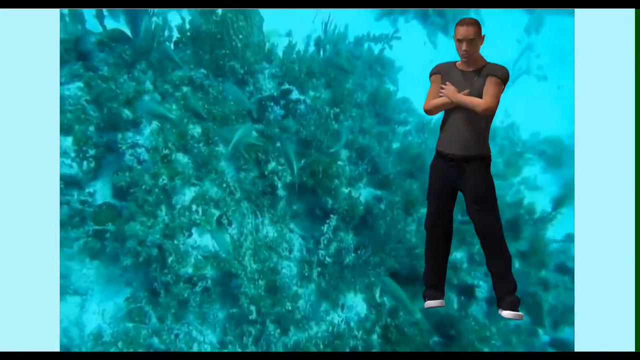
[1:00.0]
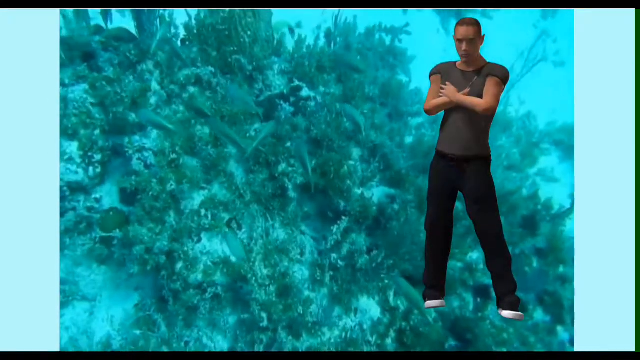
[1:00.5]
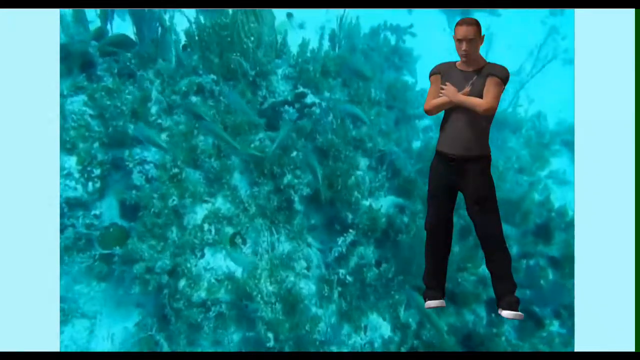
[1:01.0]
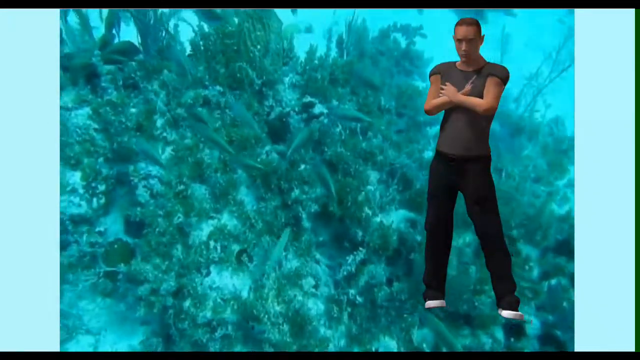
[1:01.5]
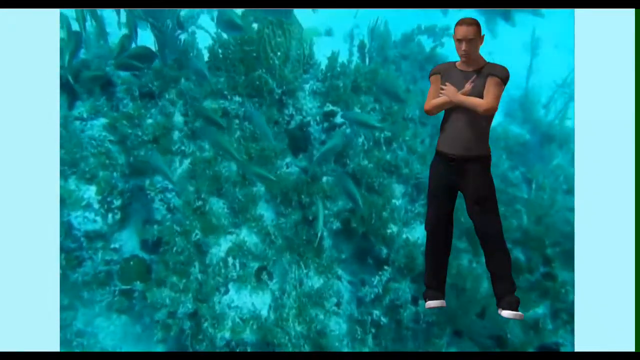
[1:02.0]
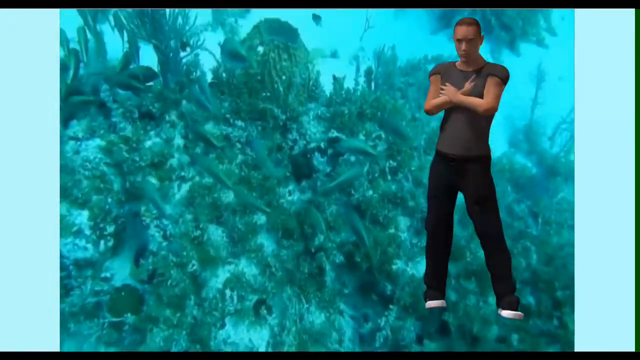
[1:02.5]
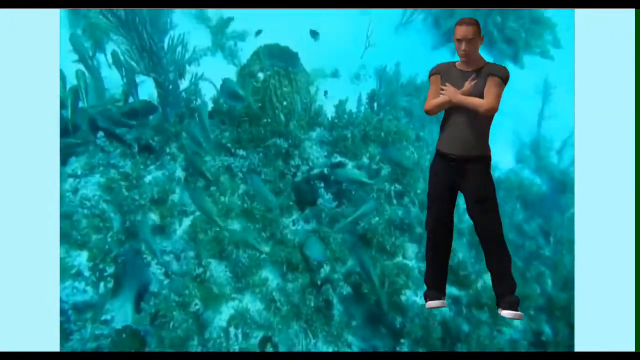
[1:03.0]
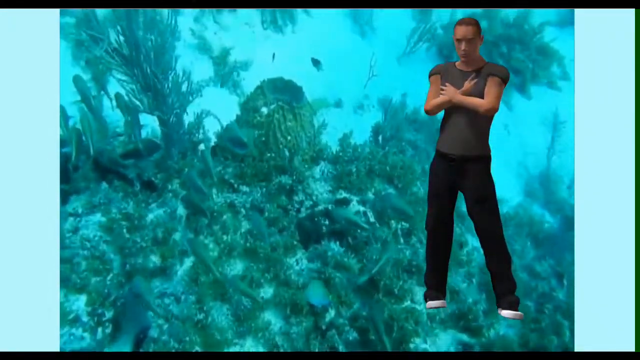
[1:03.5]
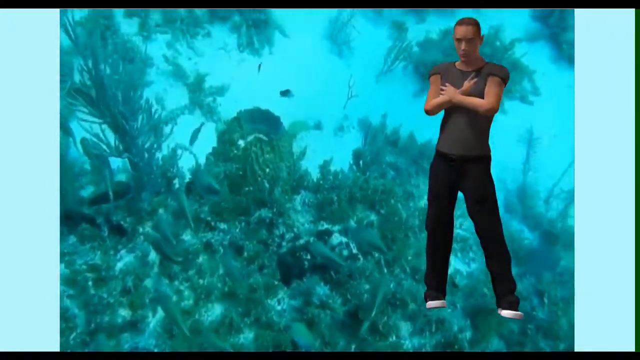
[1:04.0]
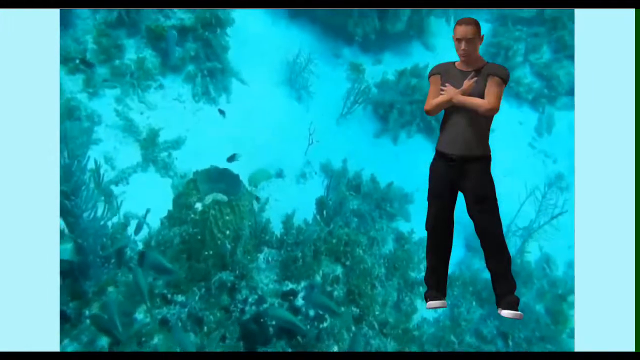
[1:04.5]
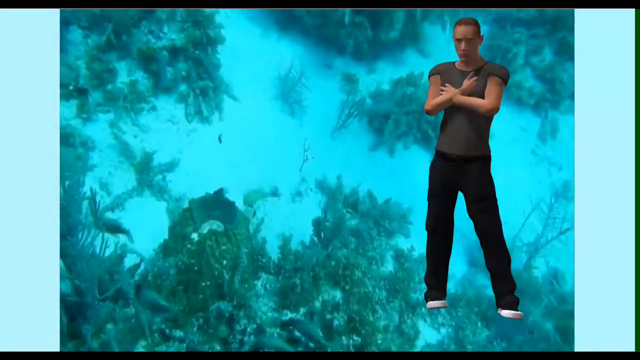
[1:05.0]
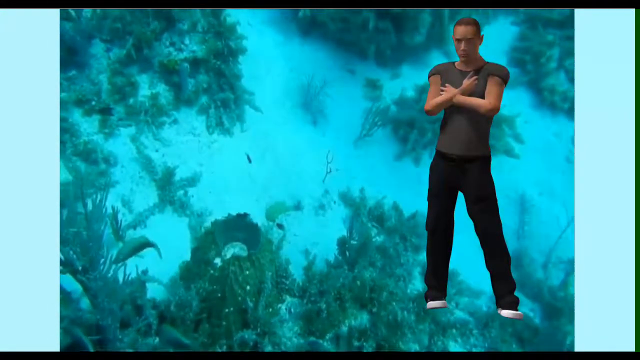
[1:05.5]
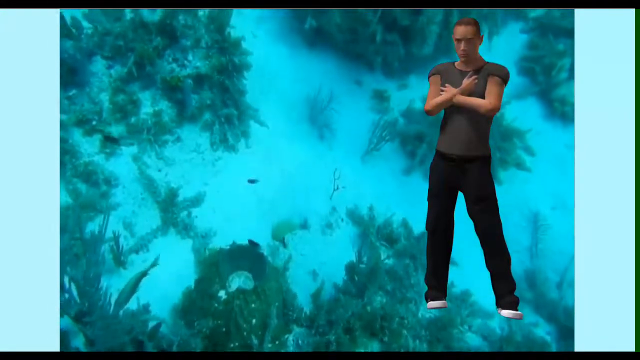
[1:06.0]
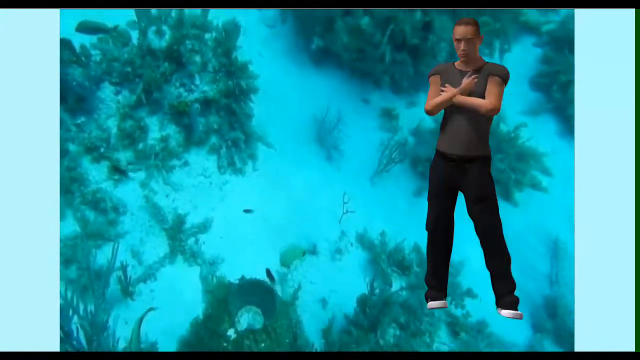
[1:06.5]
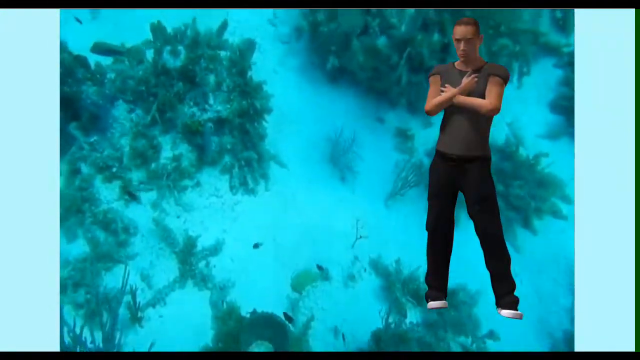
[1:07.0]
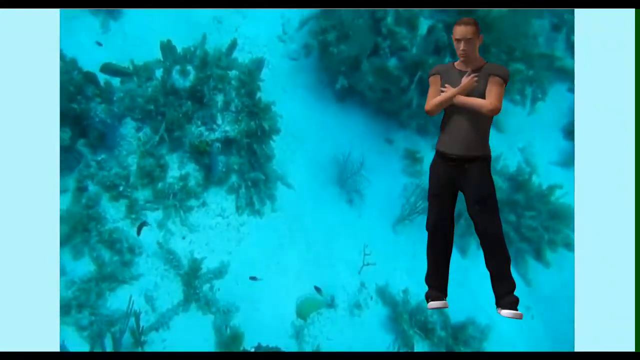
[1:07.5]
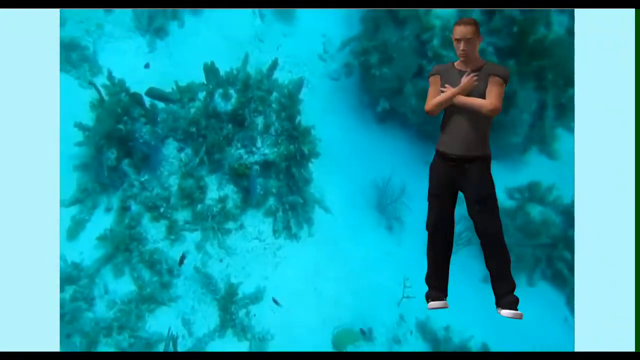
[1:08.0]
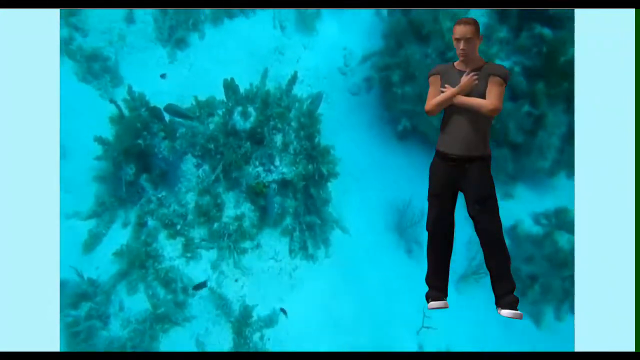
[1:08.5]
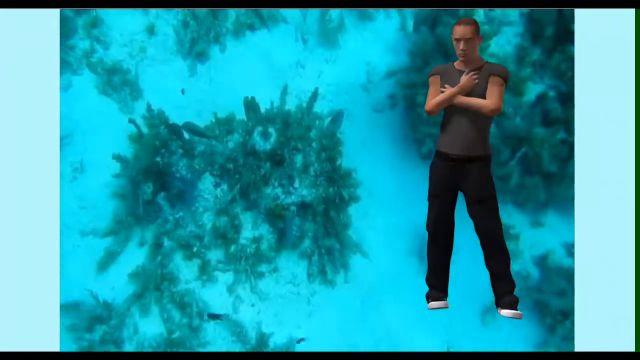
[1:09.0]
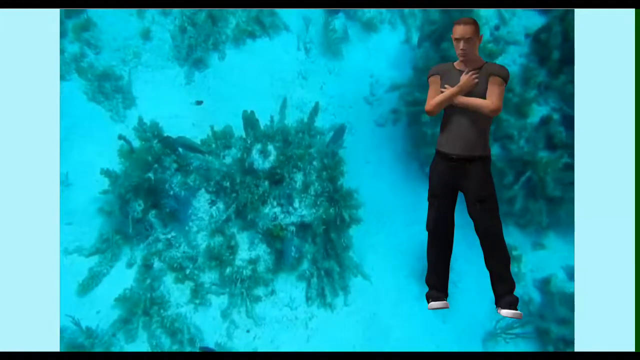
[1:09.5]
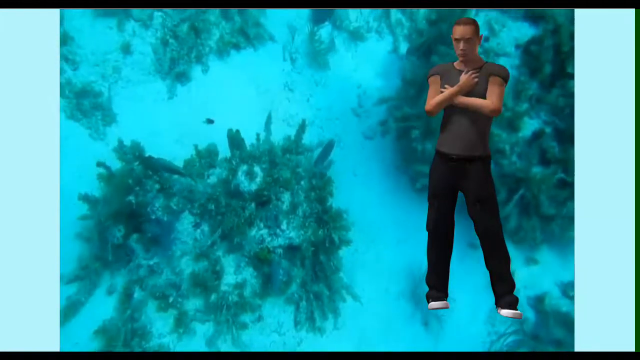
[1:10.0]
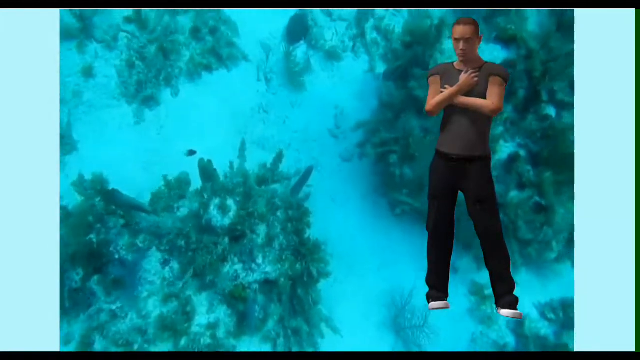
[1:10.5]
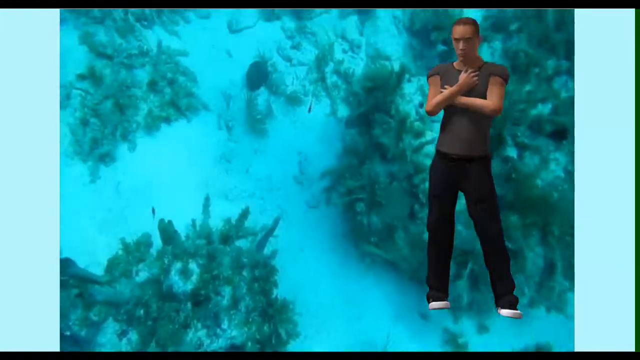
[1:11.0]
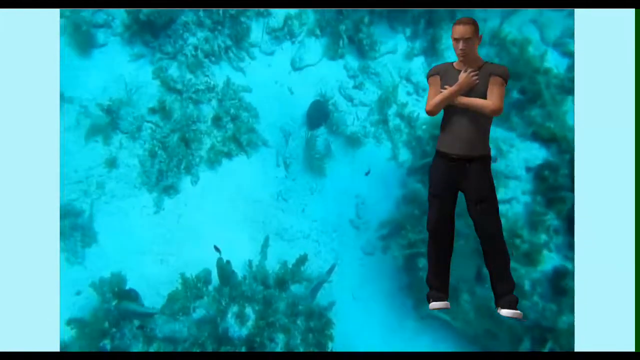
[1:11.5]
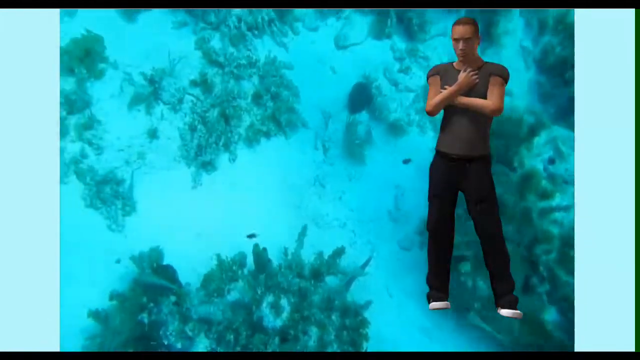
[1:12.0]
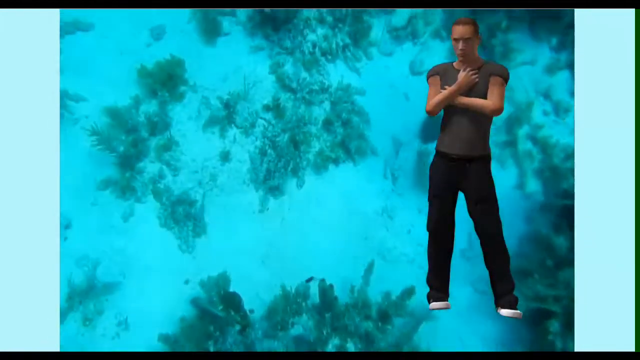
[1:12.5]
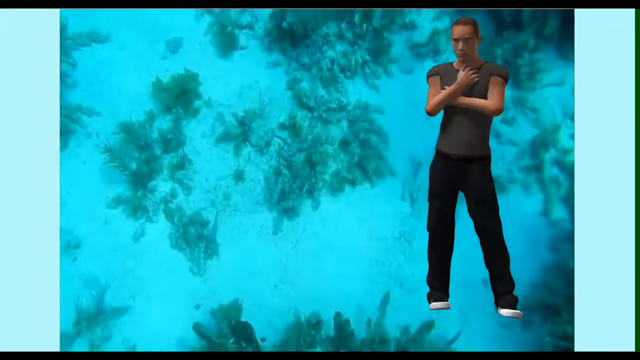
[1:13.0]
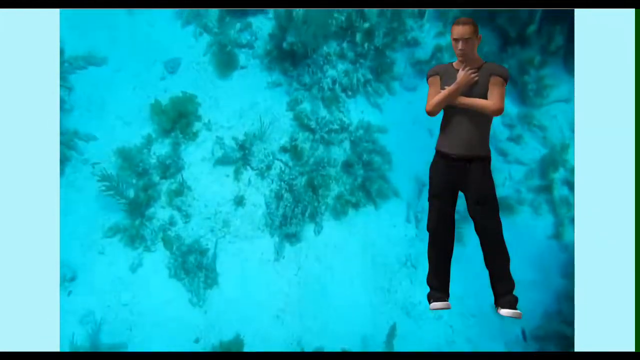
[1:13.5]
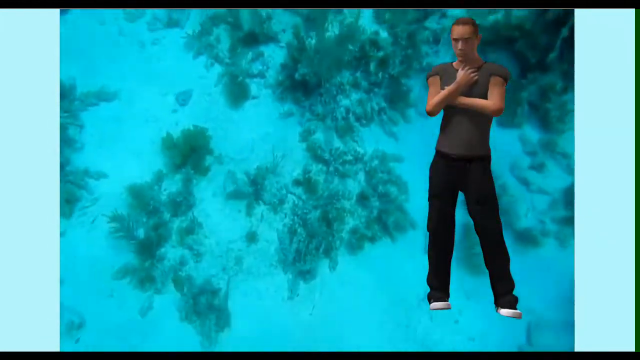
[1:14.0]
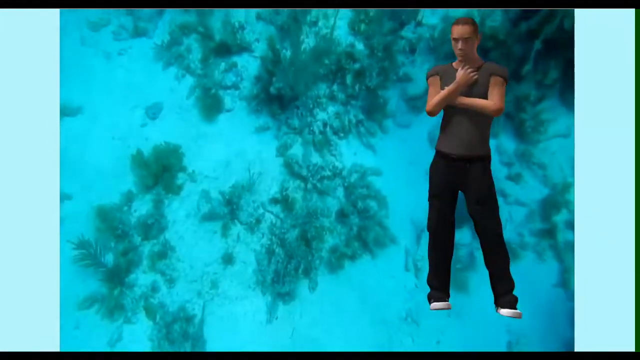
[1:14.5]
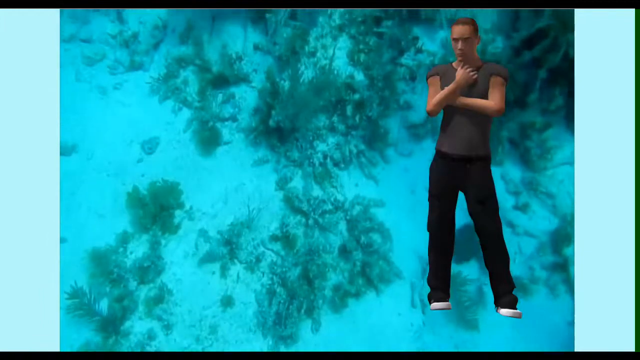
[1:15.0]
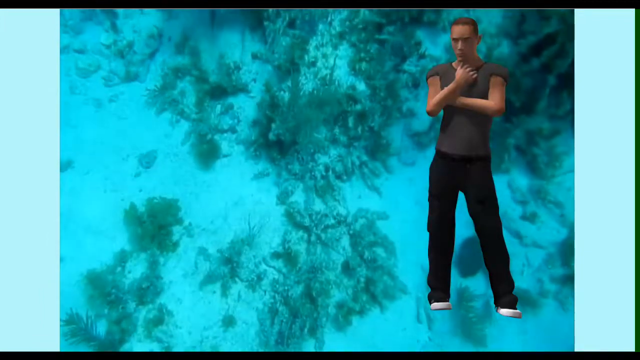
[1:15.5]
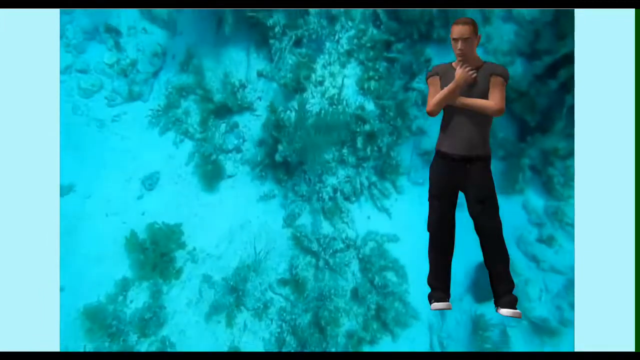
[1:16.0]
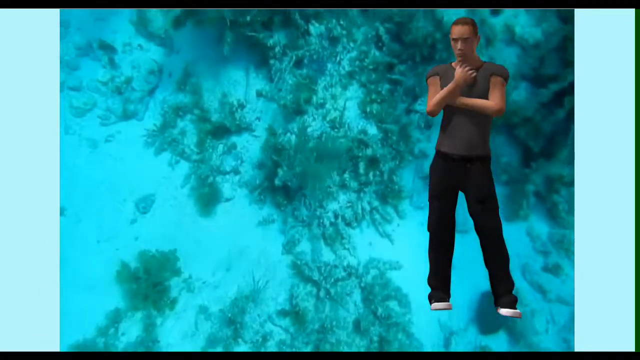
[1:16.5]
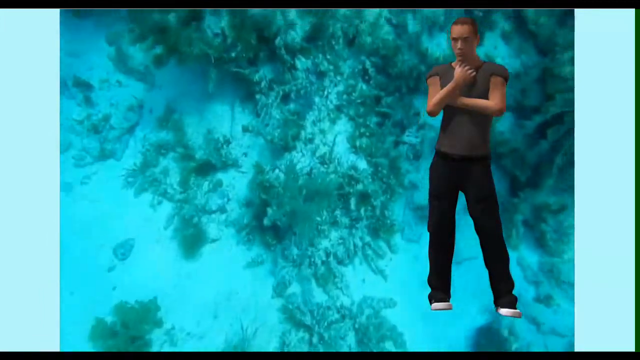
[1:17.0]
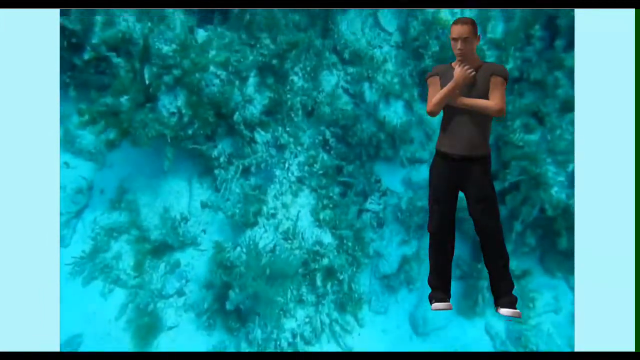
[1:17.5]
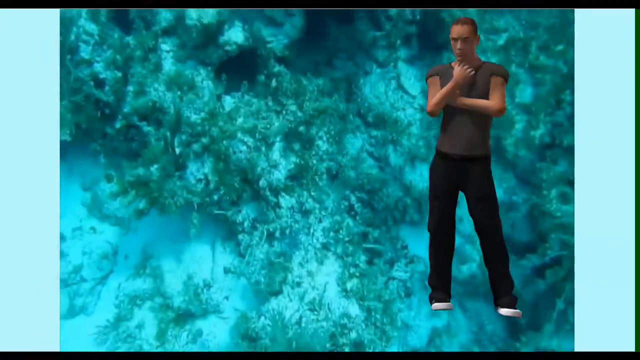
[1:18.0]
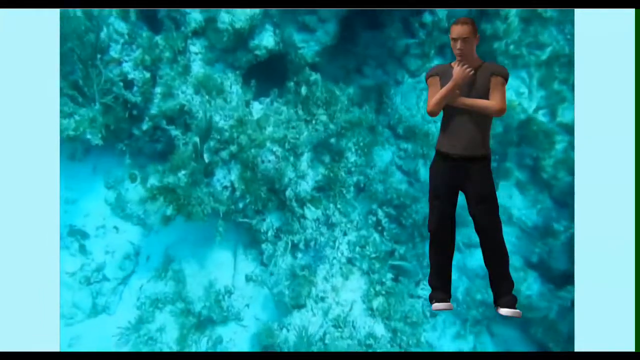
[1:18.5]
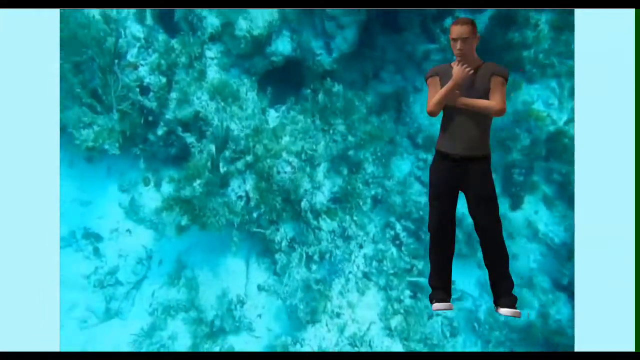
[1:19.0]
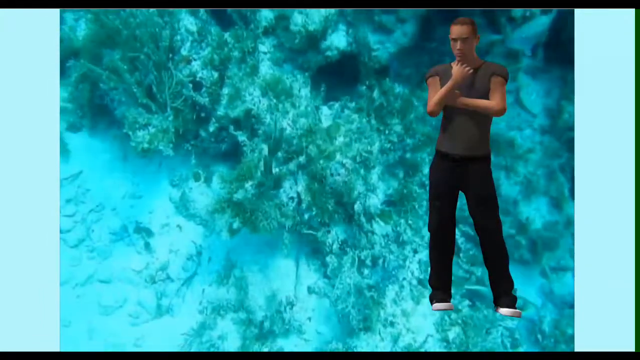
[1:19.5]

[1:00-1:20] A video shows plants underneath water. There is white sand on the bottom, but it is mostly covered by greenish vegetation; the green is very subtle. It looks like a dense patch of weeds for the most part, with sunlight making a few spots look brighter than others. Superimposed on the video is an animated character of a thin adult male wearing long black pants and a short-sleeved gray t-shirt. He stands with his arms crossed across his chest on the right side of the screen, reaching most of the way from the bottom to the top. He has very short brown hair, easily visible ears and a somewhat stern look on his face. He does not appear to be talking; he is just standing in front of the video. A few small fish swim around as the video moves up and shows areas with more sand and less vegetation.